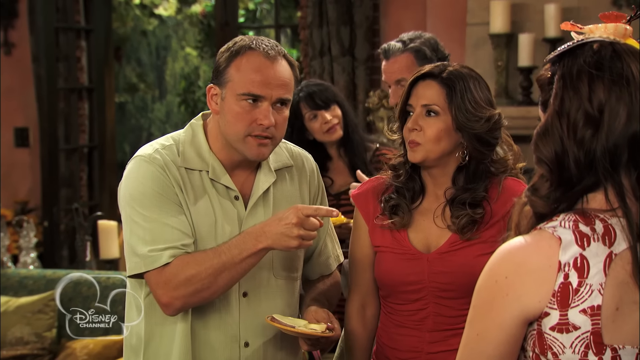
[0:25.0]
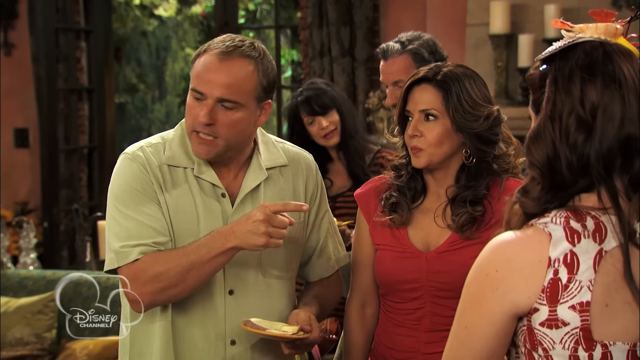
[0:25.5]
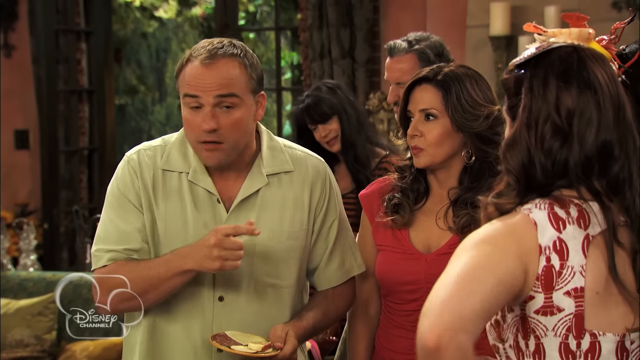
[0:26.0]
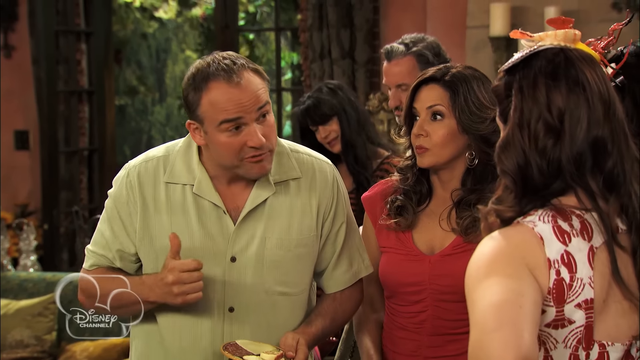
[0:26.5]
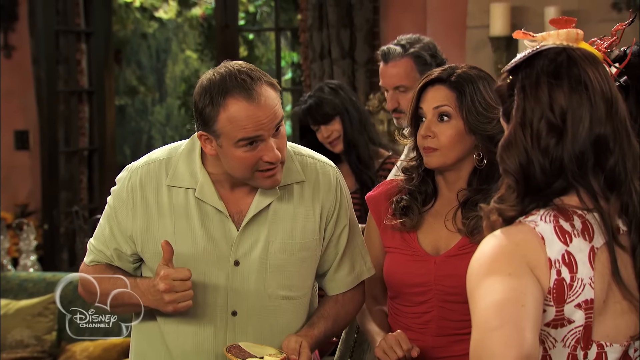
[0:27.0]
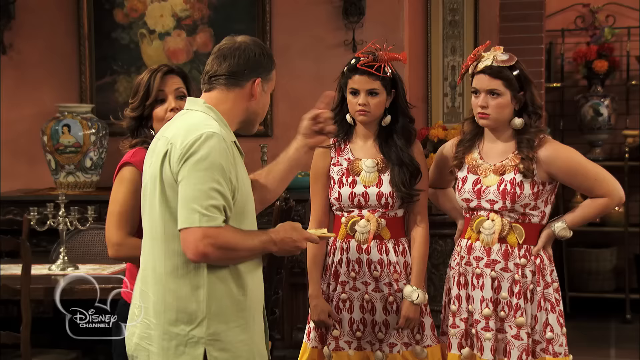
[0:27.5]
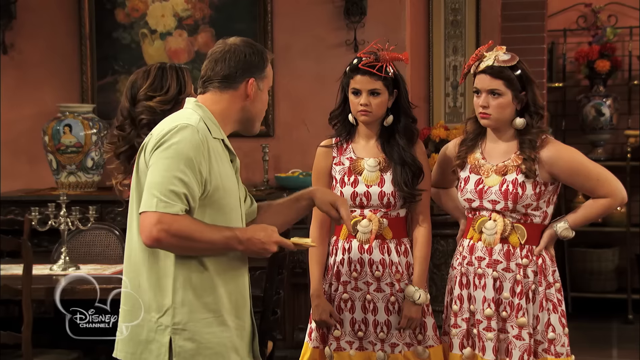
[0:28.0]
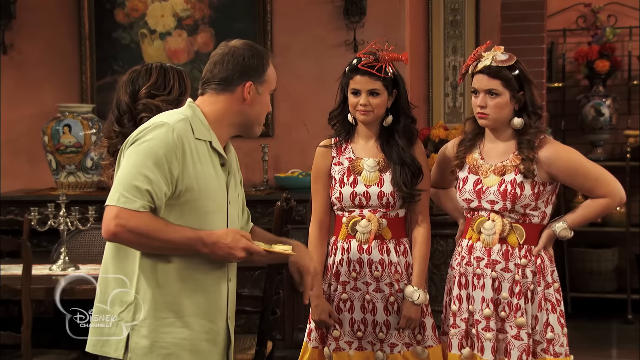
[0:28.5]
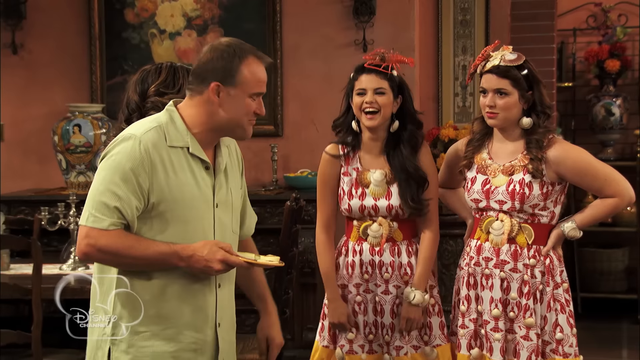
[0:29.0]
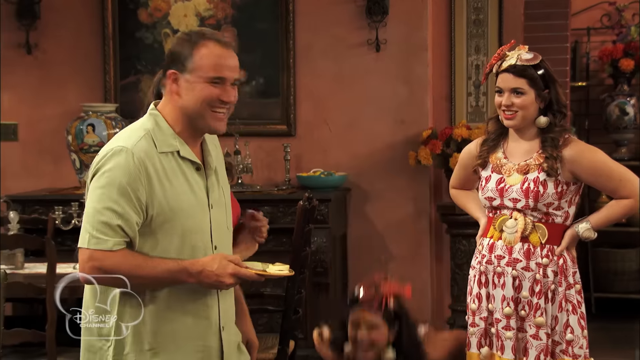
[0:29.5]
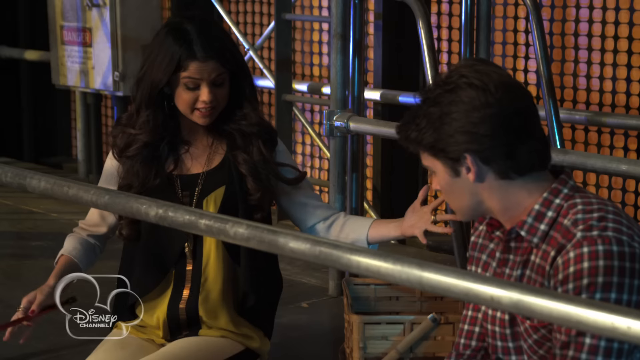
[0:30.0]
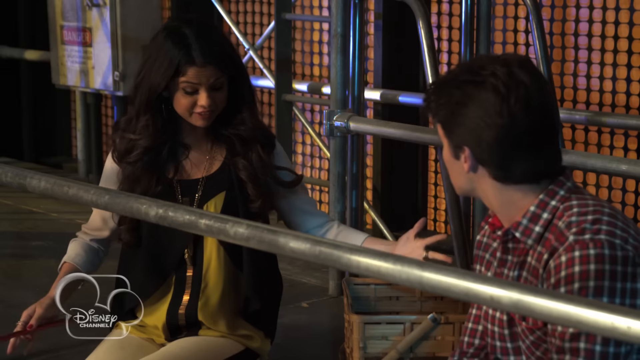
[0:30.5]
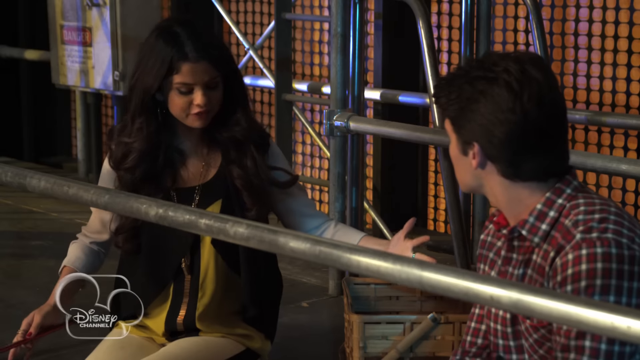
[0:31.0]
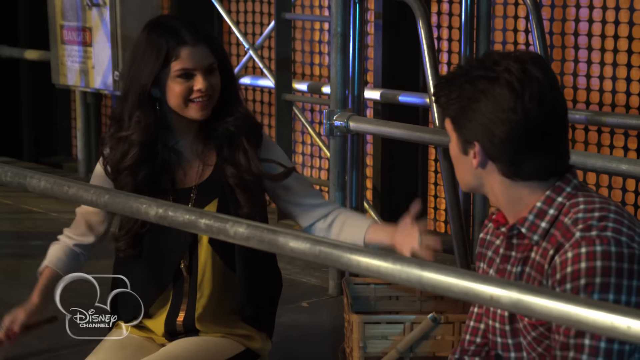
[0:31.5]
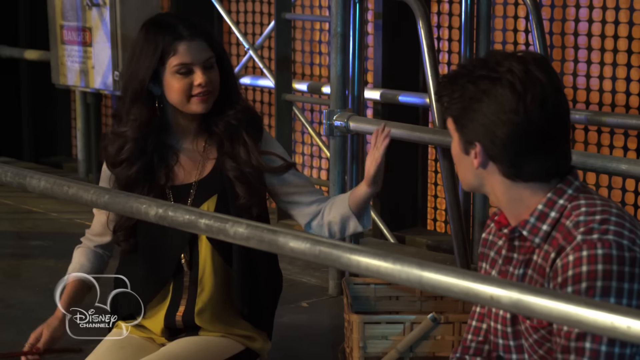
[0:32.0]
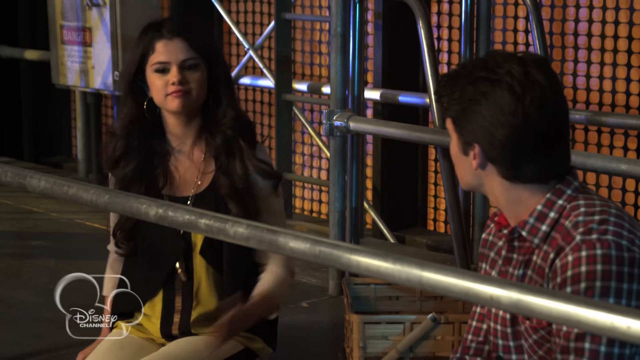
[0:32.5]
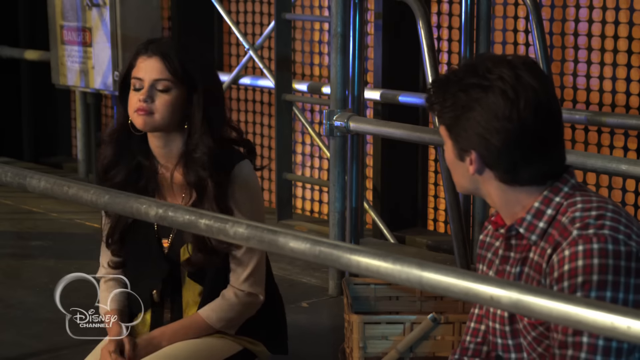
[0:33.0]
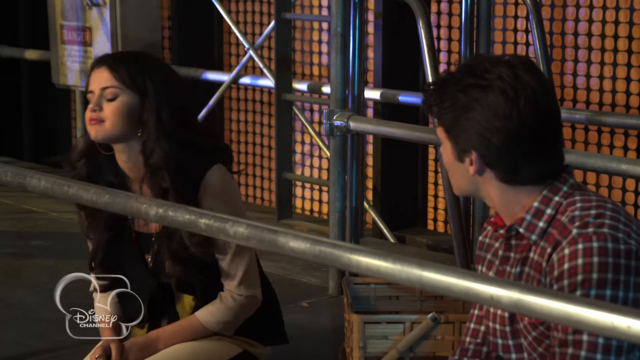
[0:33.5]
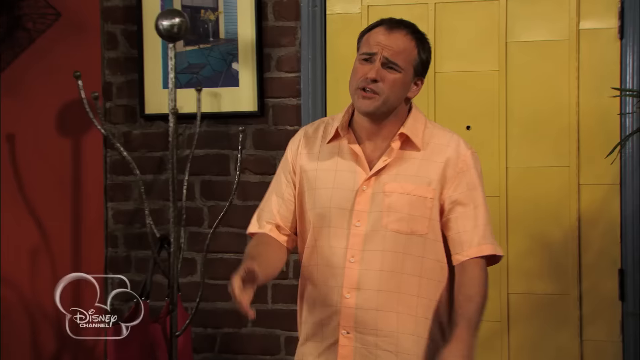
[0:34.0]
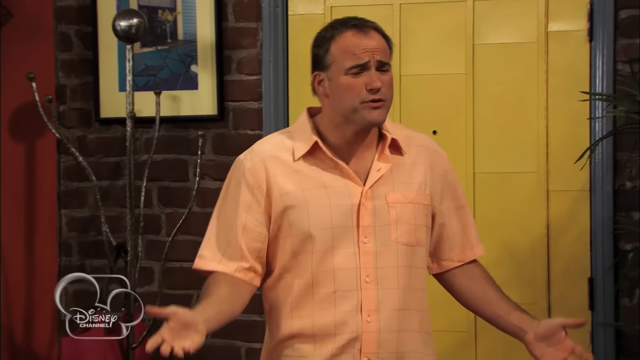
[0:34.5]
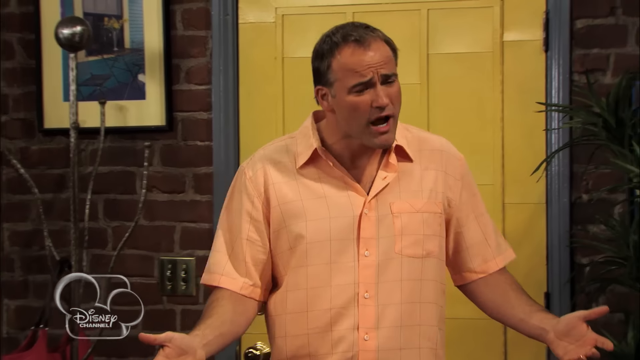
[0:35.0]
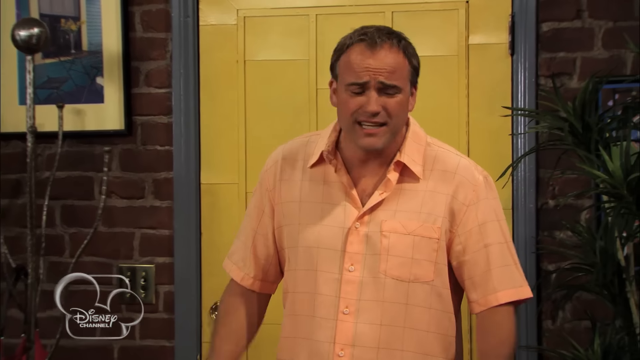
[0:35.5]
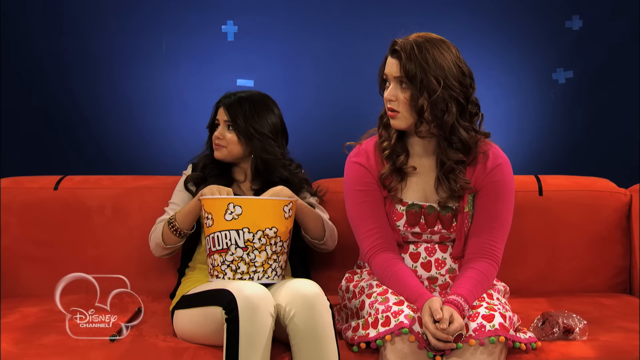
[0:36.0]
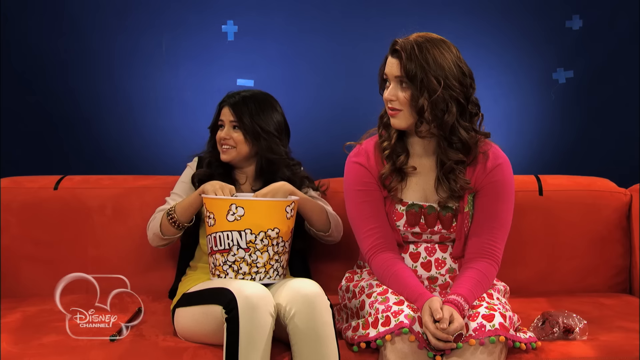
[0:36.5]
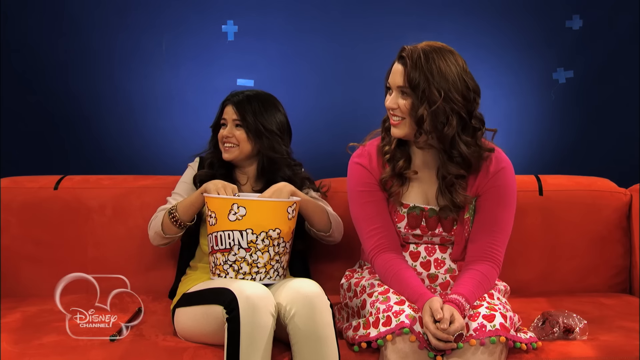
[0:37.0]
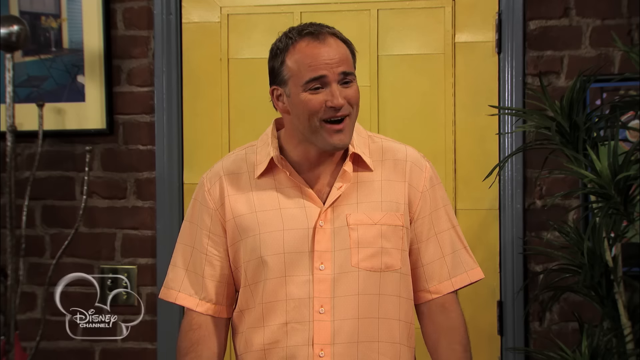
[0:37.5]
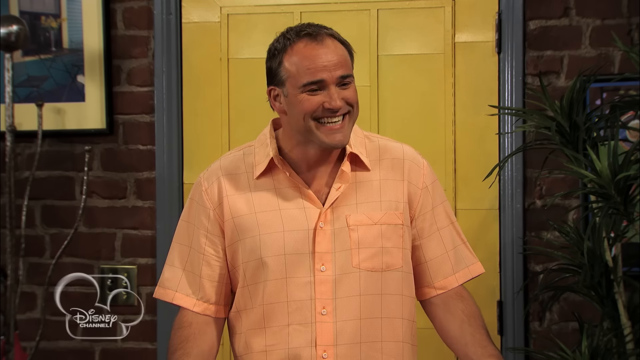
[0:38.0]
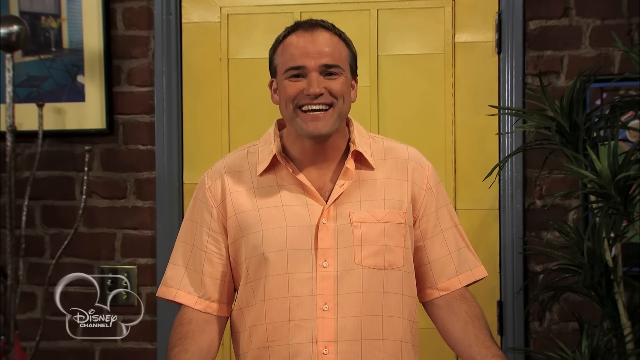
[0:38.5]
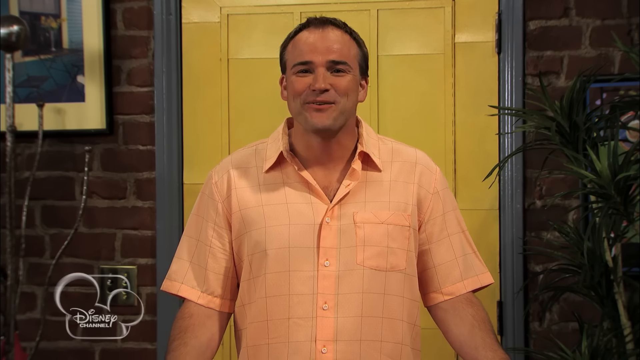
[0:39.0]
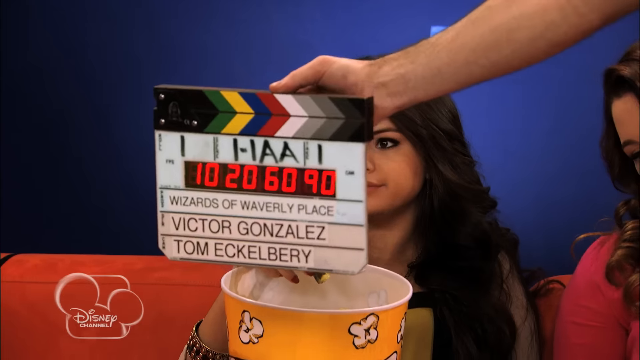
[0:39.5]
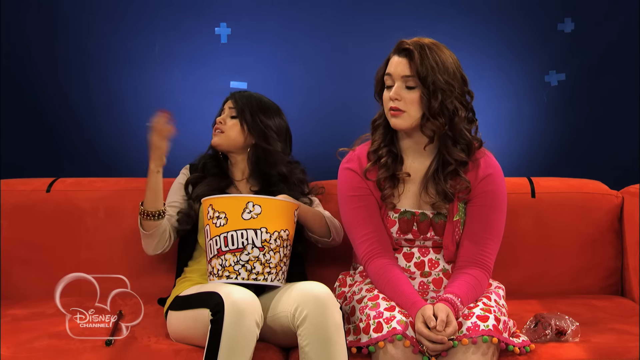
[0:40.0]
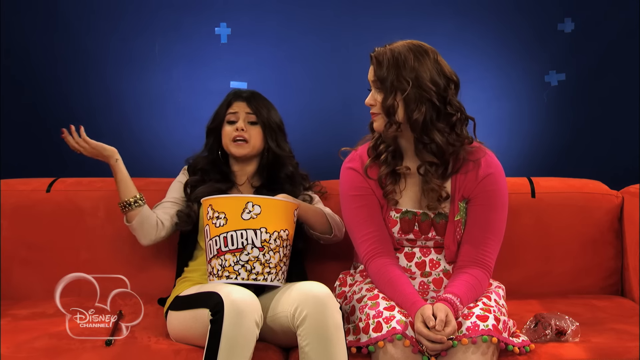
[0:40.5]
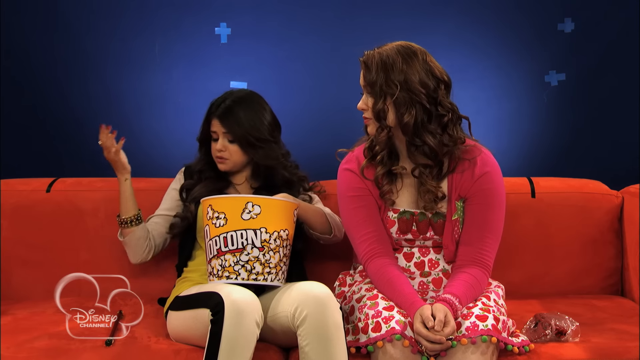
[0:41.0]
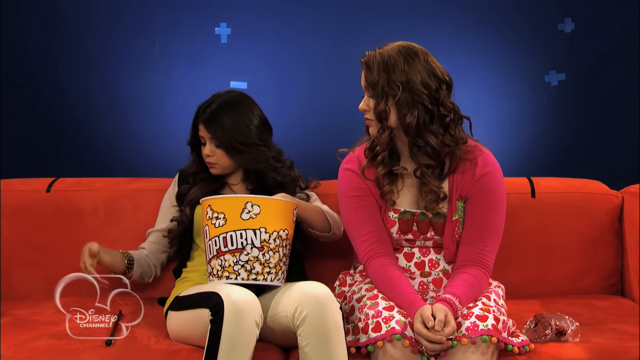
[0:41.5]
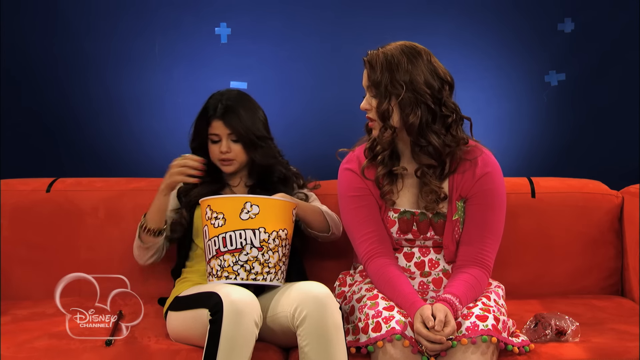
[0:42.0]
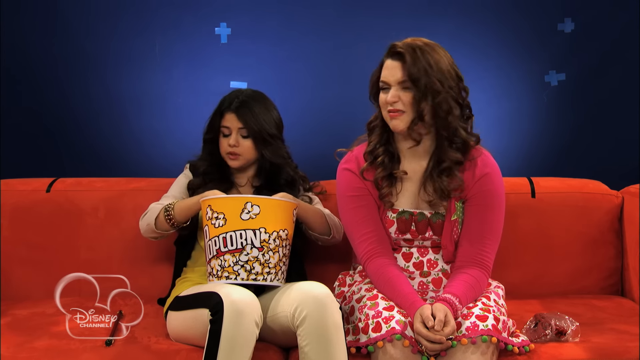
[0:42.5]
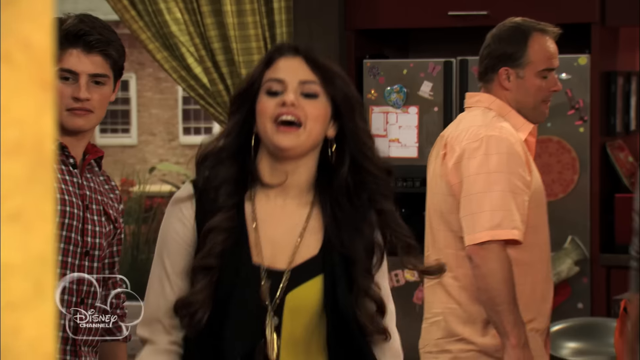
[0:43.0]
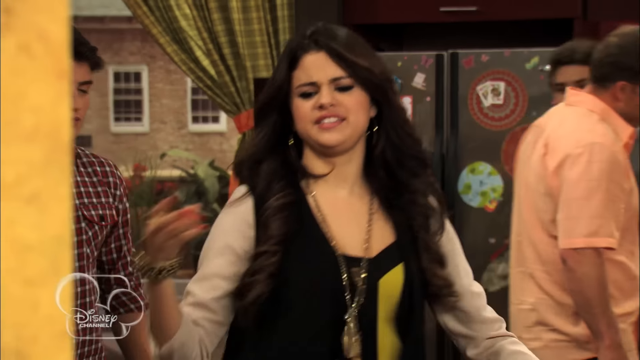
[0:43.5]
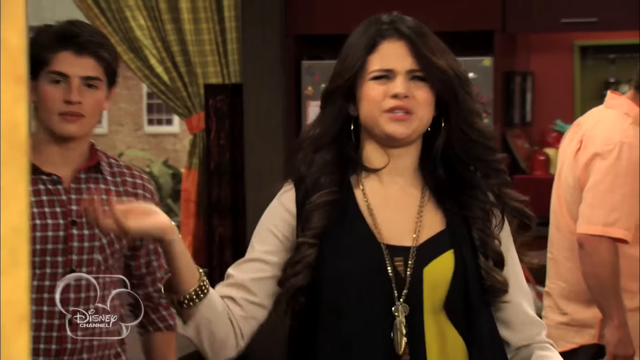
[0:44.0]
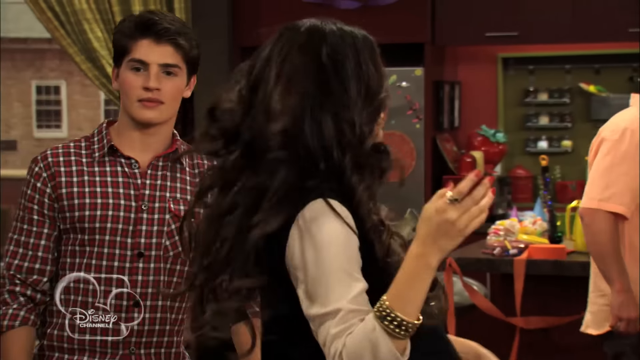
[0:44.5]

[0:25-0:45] The man in the olive green polo shirt speaks, putting his head downwards as he talks to the two young girls. The shot changes to a side view of the man in green, with the woman next to him mostly blocked. The two in the identical dresses look like they have serious looks on their faces. The one on the right has her hands on her hips, and the girl on the left laughs so hard she almost goes down to the floor. The next scene is completely different: a girl on the left-hand side is explaining something to a man on the right-hand side wearing a checkered shirt. In the background there is some framing that looks like poles and what looks like a vertical steel object. An action cutscene follows. A man wearing an orange polo shirt is explaining something with a yellow door behind him. Then the two women from earlier are sitting down on an orange couch. The girl on the left is holding popcorn, and both are looking to their right, which is screen left. The camera quickly cuts back to the man, then back to the two women, and the girl holding the popcorn is saying something. The camera quickly cuts to a different scene where she is walking in a different outfit, with the man in the checkered shirt behind her.